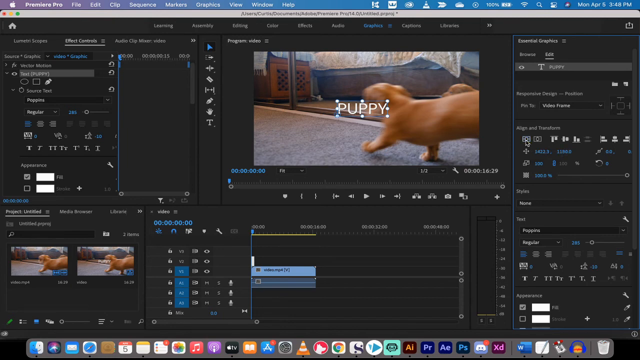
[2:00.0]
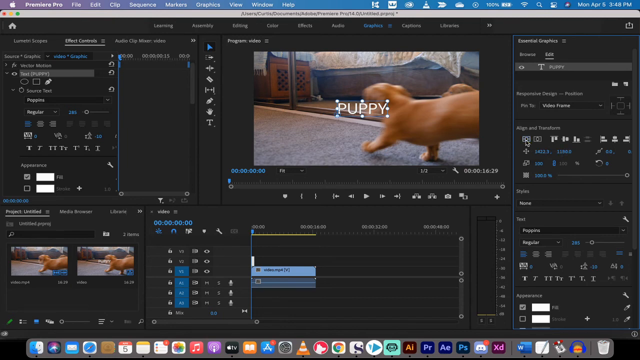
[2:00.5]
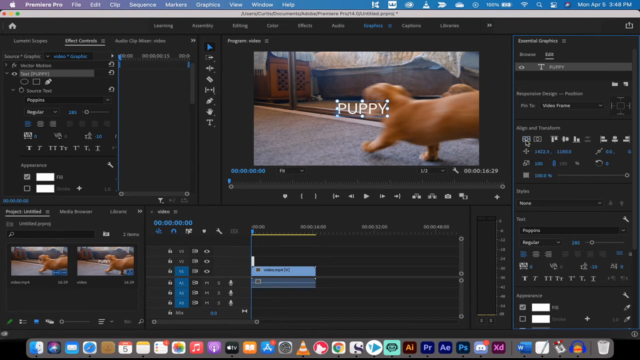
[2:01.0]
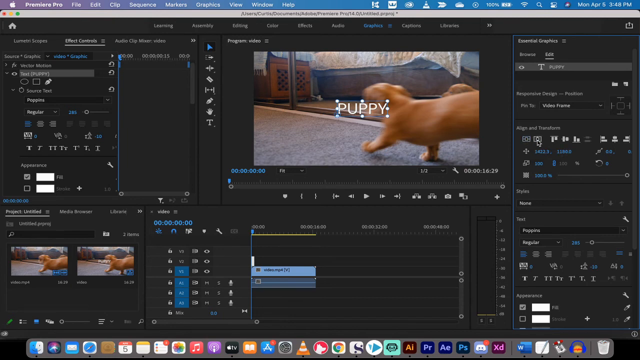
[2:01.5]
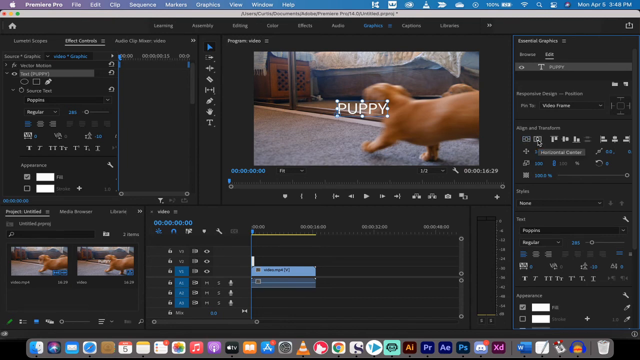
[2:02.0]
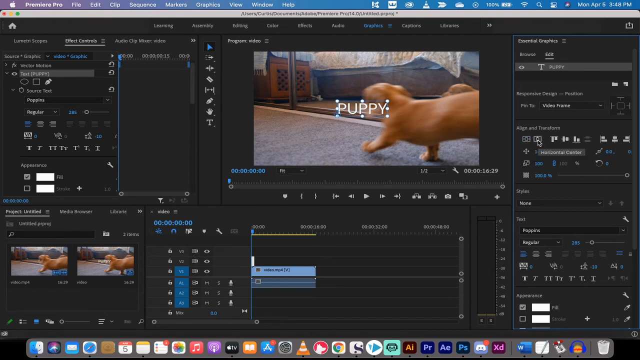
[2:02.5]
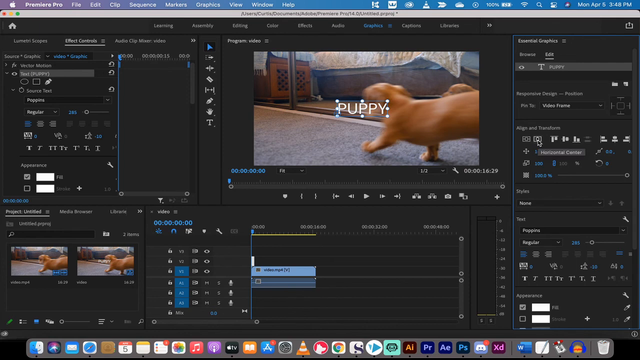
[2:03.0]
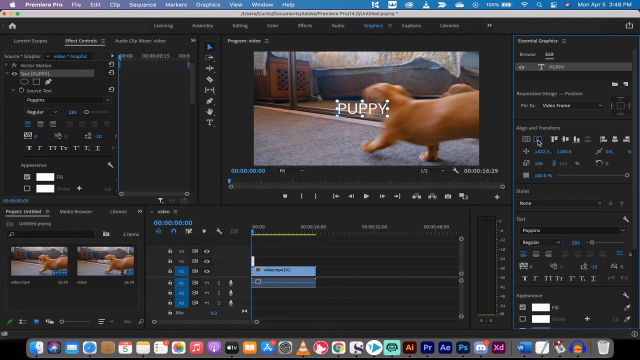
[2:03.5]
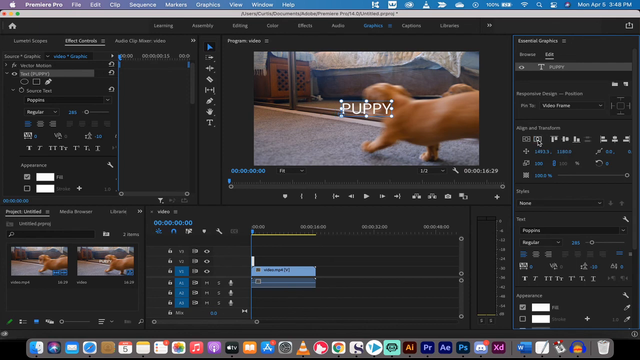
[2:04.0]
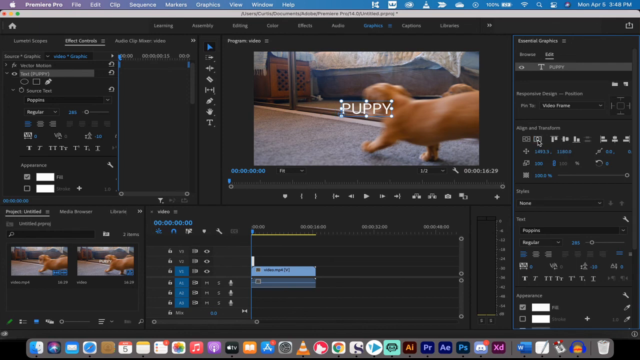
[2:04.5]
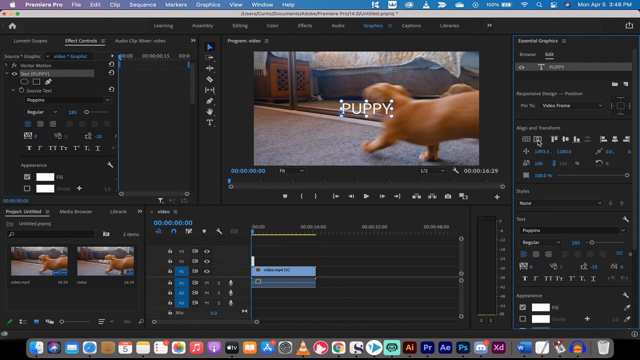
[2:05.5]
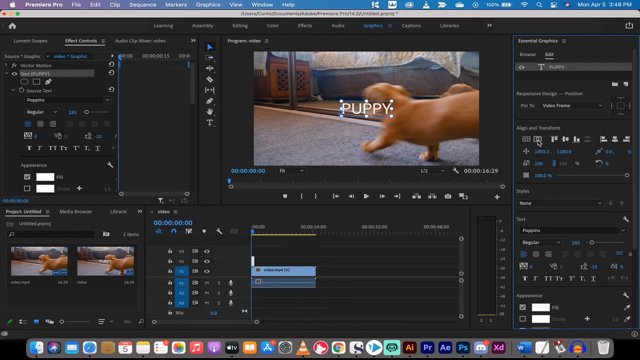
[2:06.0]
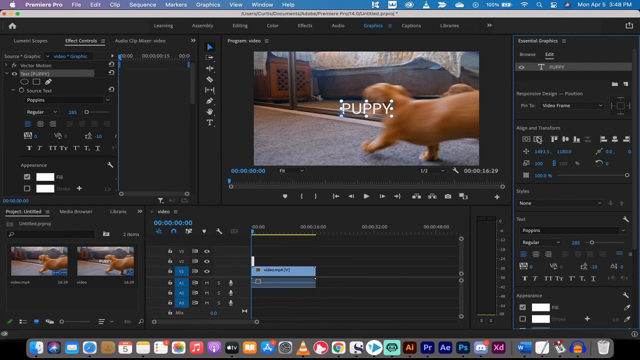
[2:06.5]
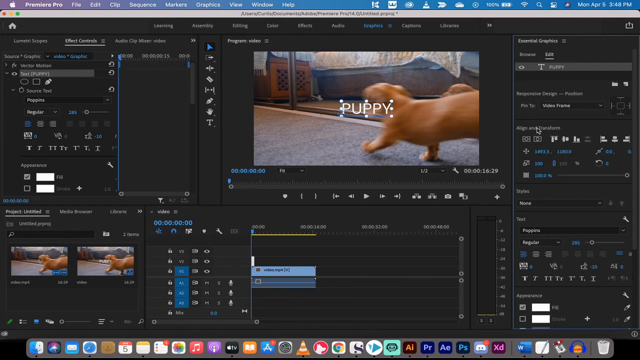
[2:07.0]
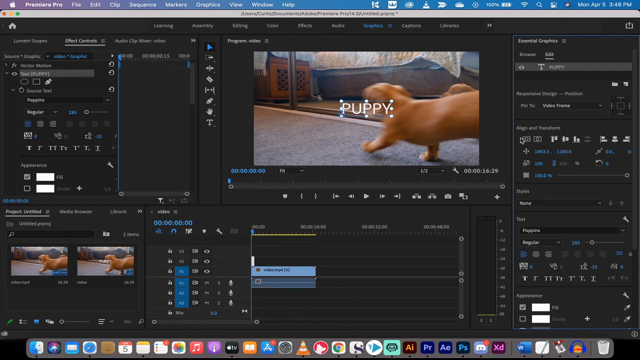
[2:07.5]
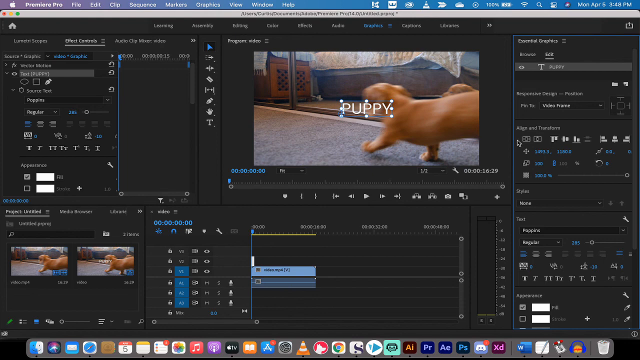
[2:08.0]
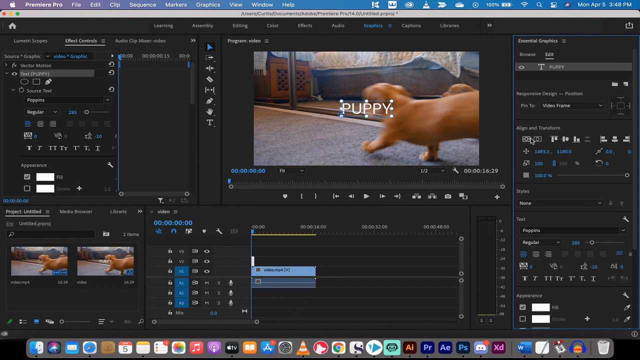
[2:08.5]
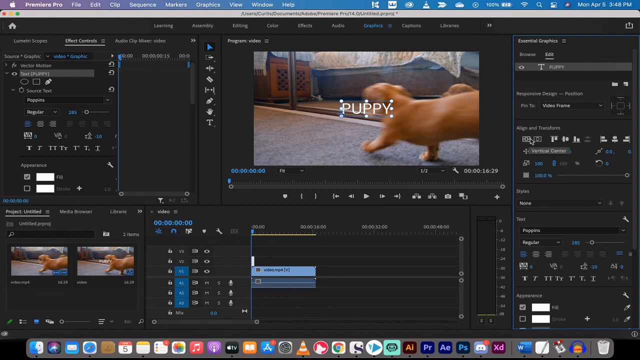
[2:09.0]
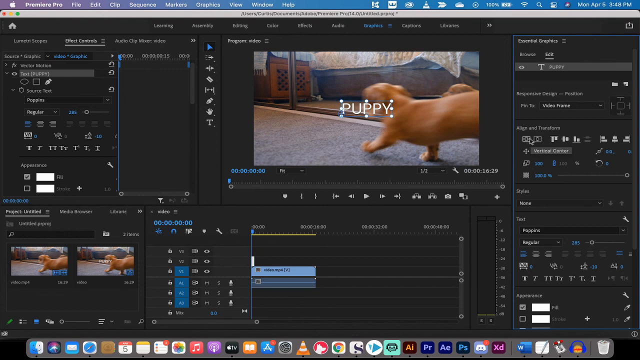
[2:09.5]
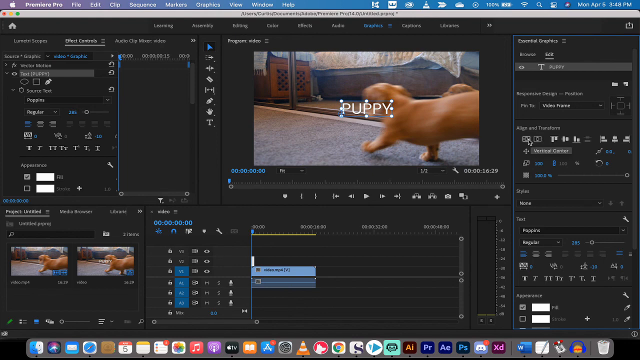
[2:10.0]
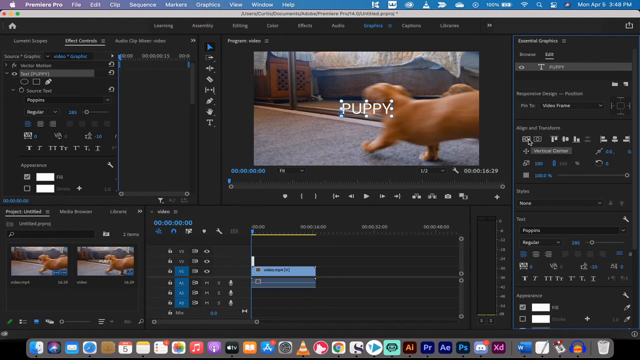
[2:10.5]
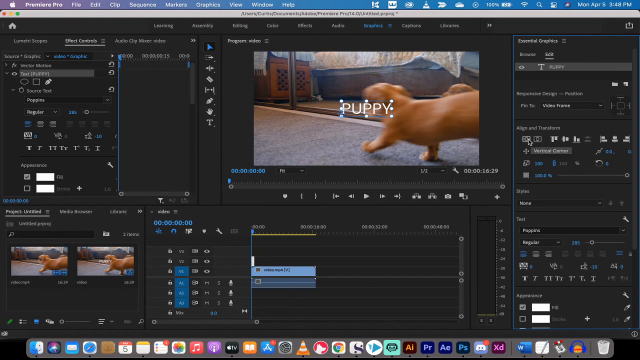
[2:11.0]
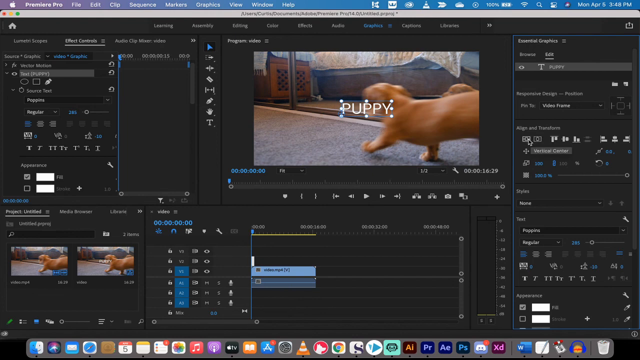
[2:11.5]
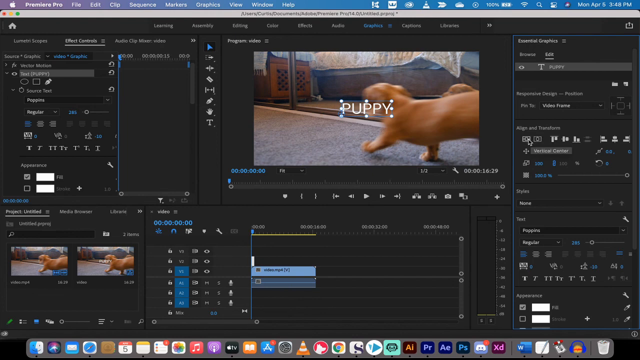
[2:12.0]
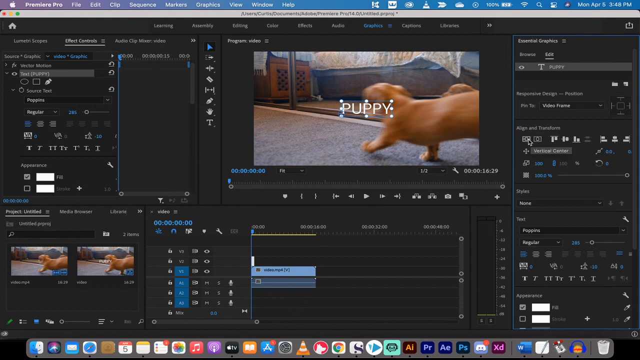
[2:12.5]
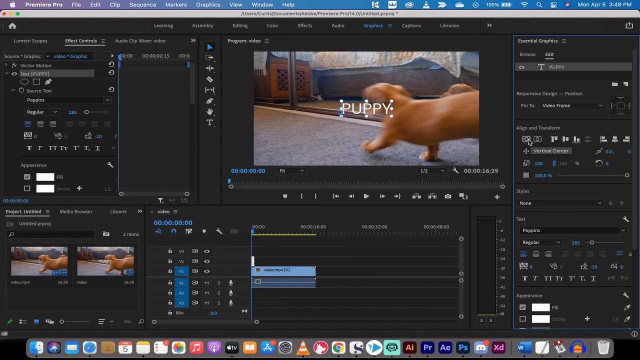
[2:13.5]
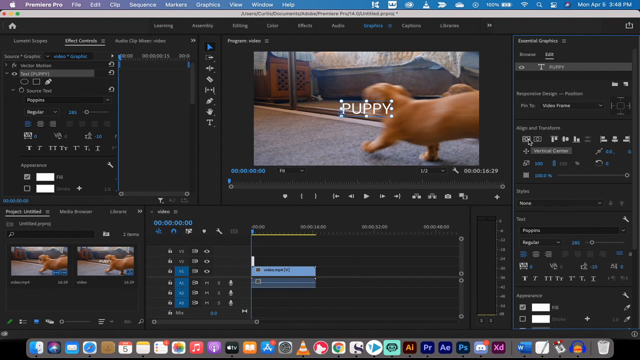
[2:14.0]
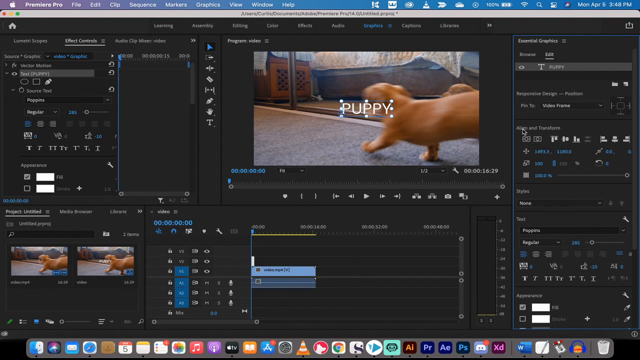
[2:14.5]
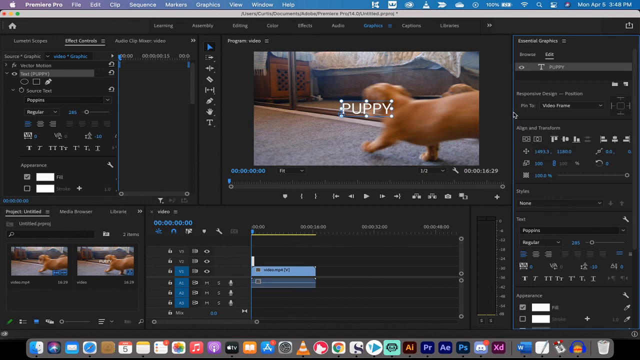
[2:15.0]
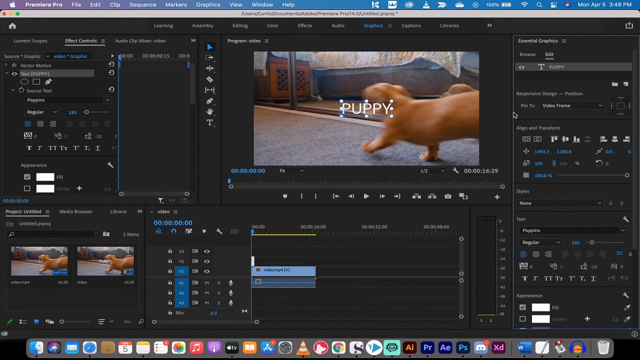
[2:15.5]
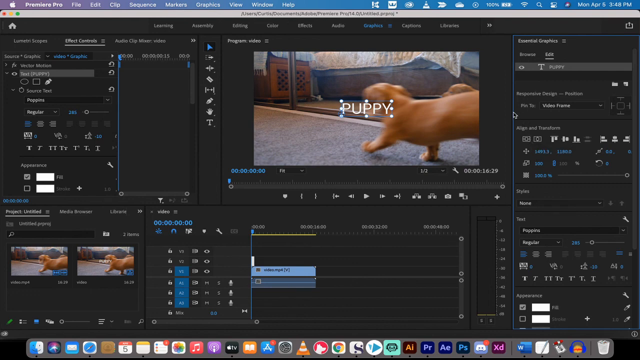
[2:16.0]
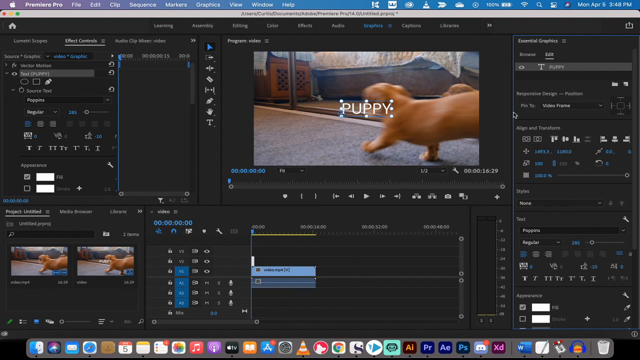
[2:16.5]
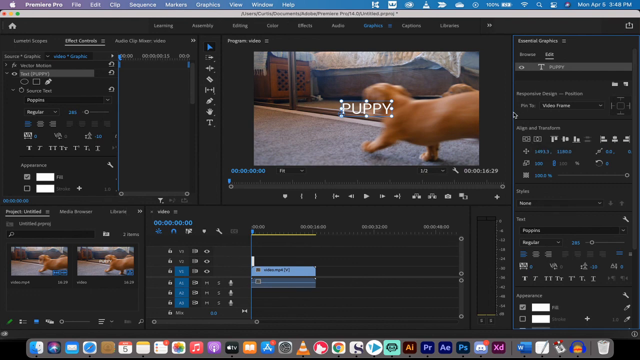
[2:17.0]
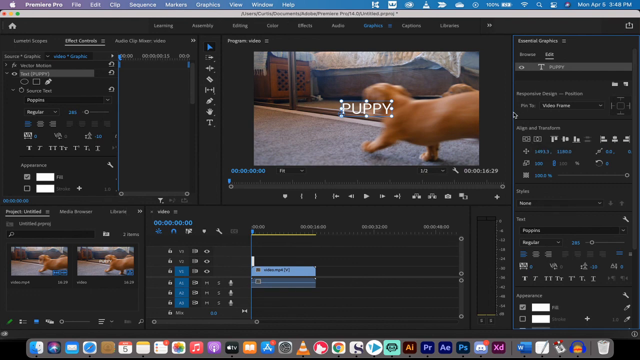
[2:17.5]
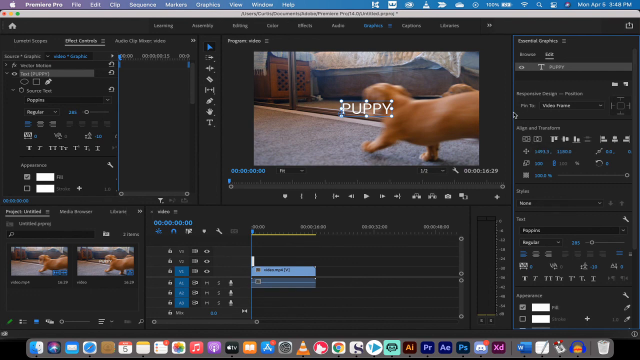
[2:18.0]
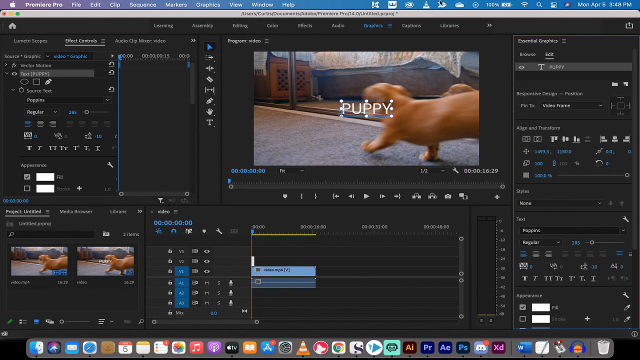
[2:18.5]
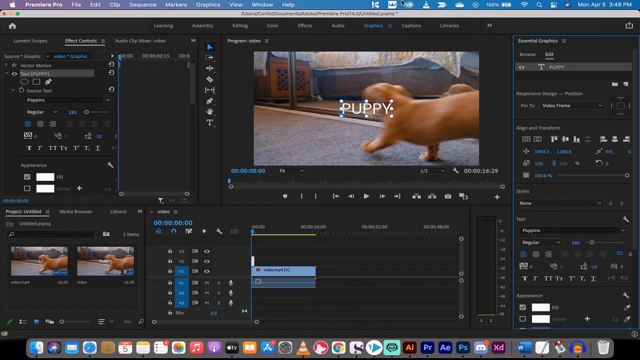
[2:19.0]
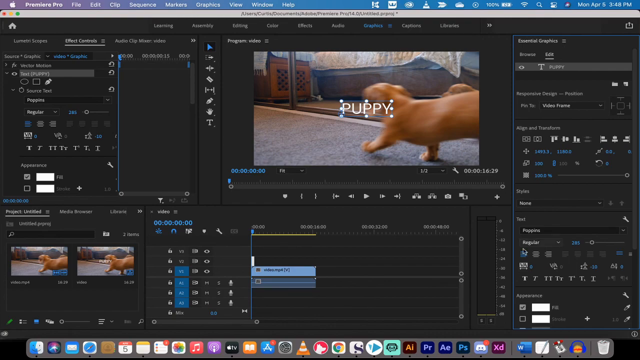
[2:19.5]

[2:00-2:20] Premiere Pro is still open, and the user is still working in the external graphics section under align and transforms, hovering over certain options and buttons. They hover over the second button under align and transforms and click it several times, moving the text in the program video preview over to the right, which centers it better. The cursor then moves to the left and back to the right, hovers over the first button under the options section, moves slightly up and around inside the external graphics section, goes back to the top of the app, then all the way back down, and moves around randomly.